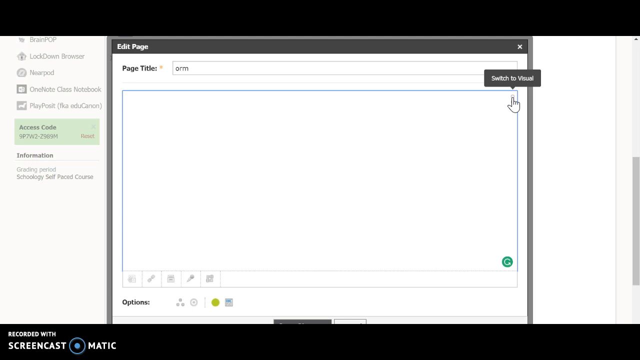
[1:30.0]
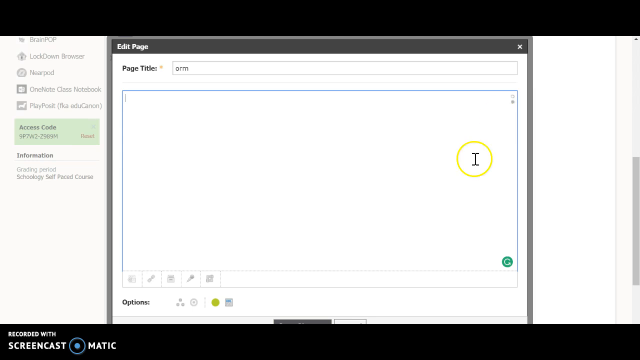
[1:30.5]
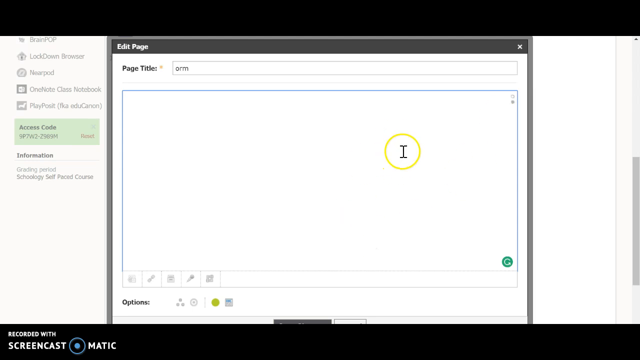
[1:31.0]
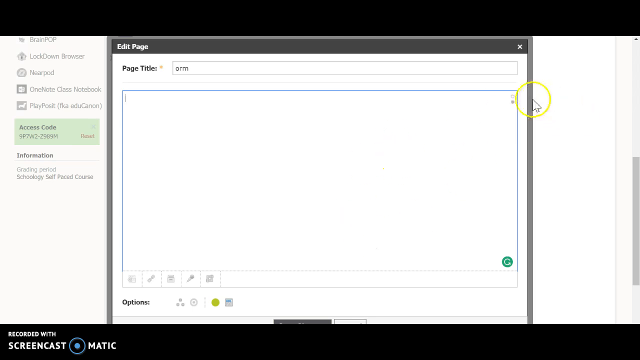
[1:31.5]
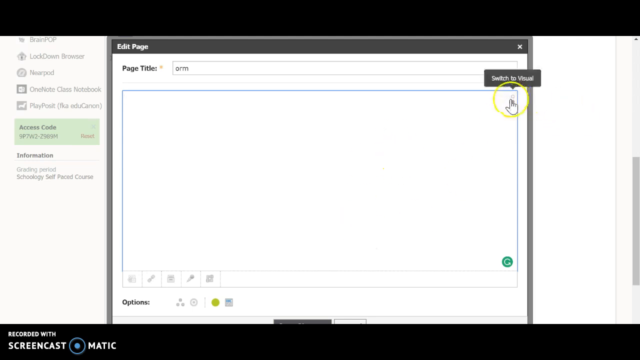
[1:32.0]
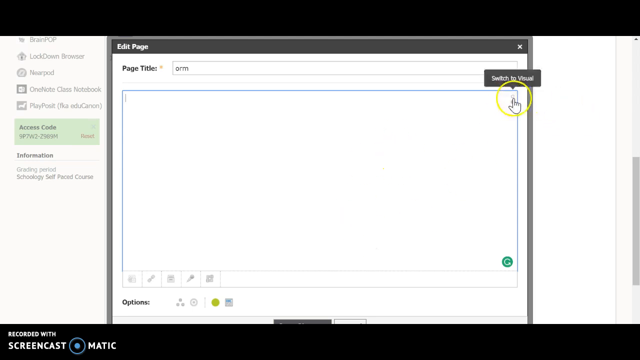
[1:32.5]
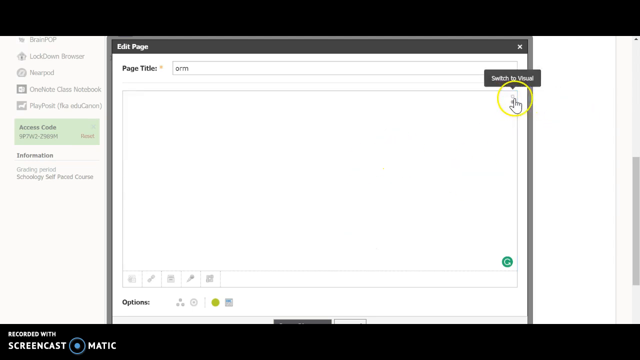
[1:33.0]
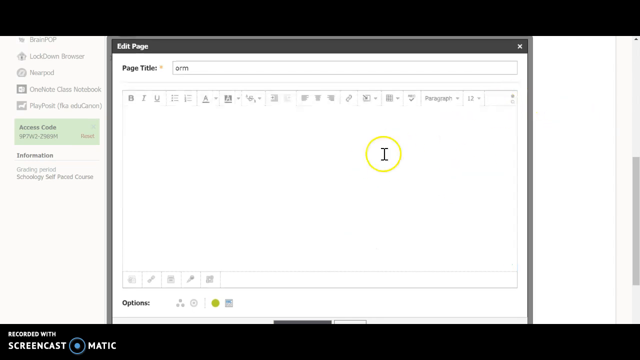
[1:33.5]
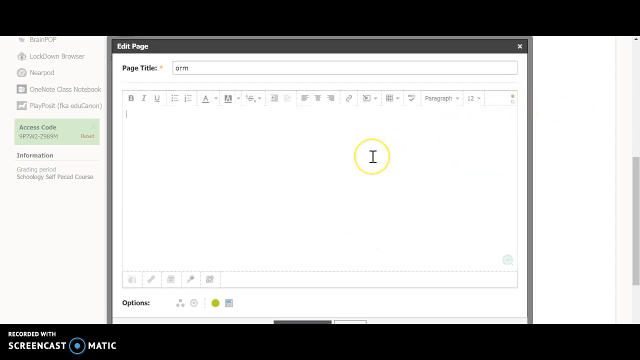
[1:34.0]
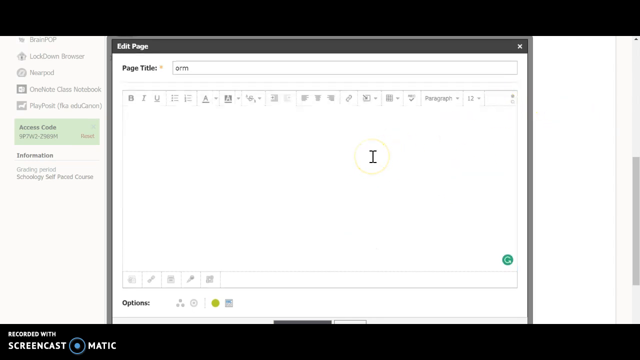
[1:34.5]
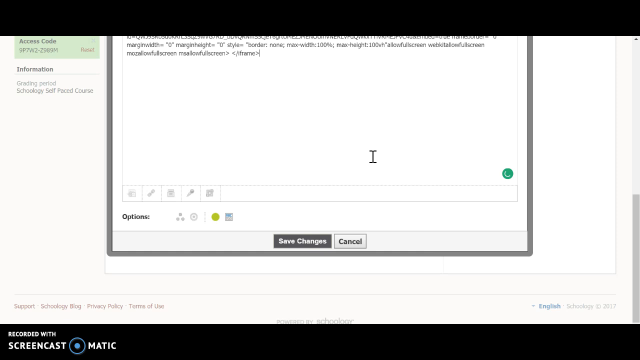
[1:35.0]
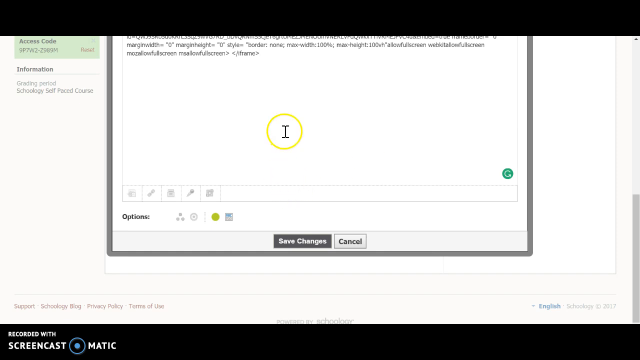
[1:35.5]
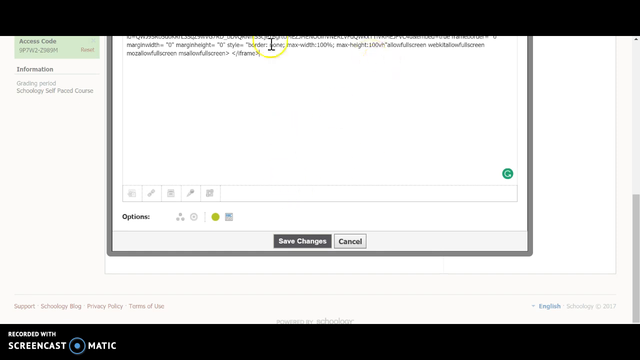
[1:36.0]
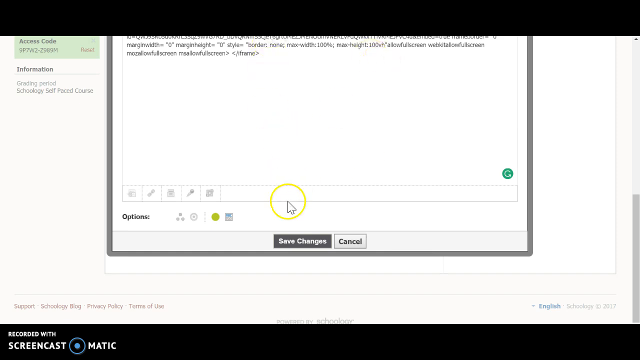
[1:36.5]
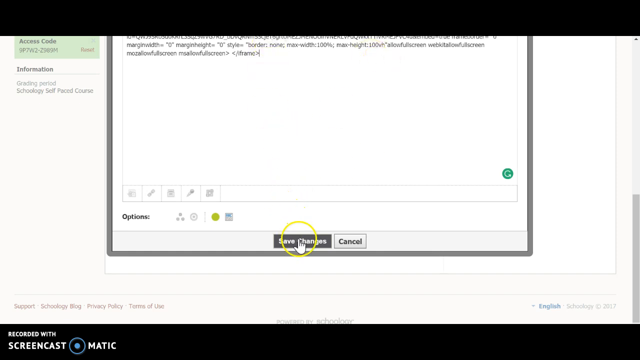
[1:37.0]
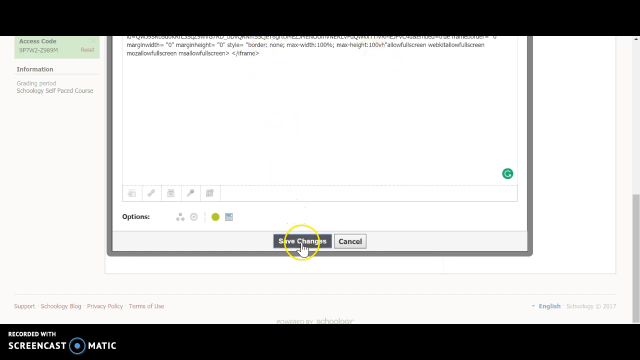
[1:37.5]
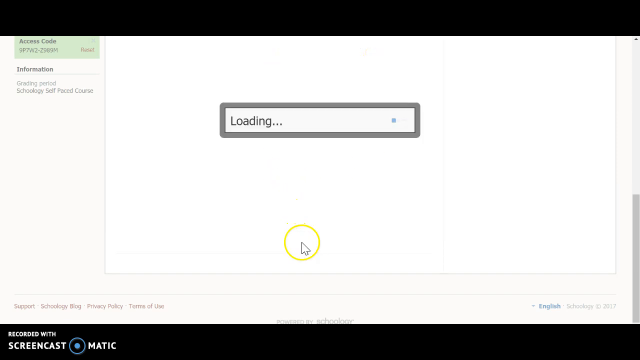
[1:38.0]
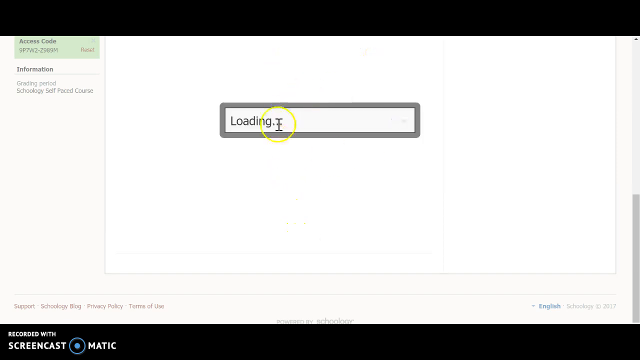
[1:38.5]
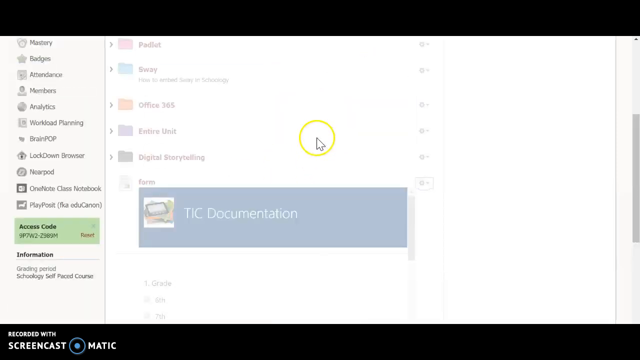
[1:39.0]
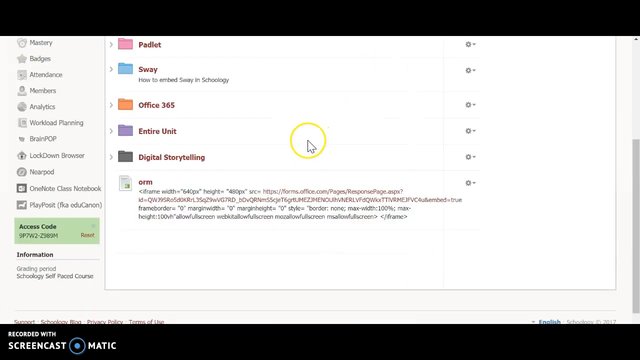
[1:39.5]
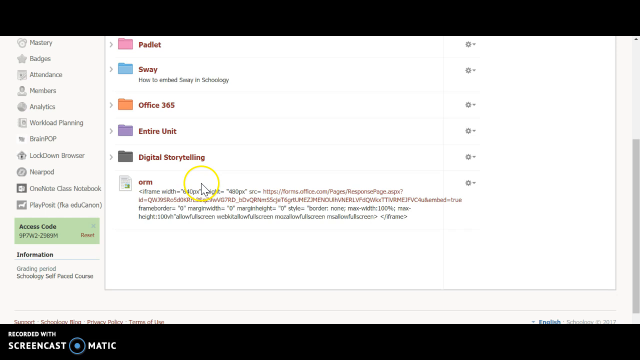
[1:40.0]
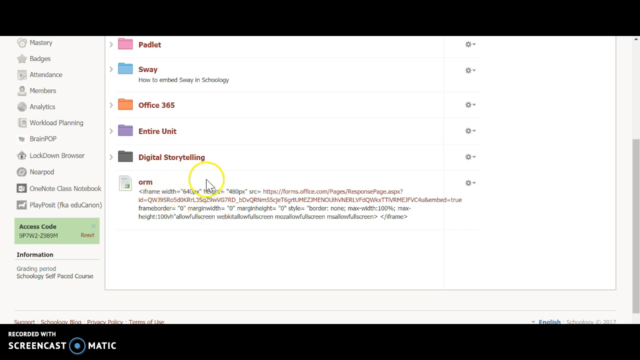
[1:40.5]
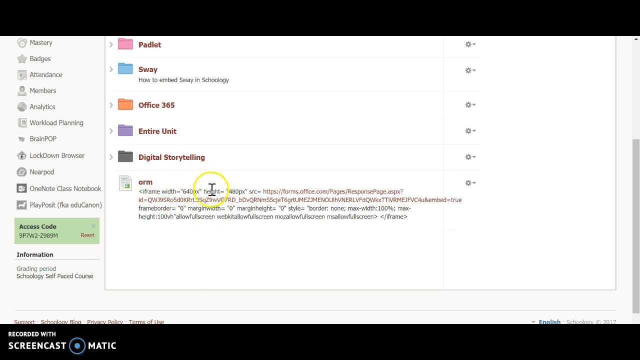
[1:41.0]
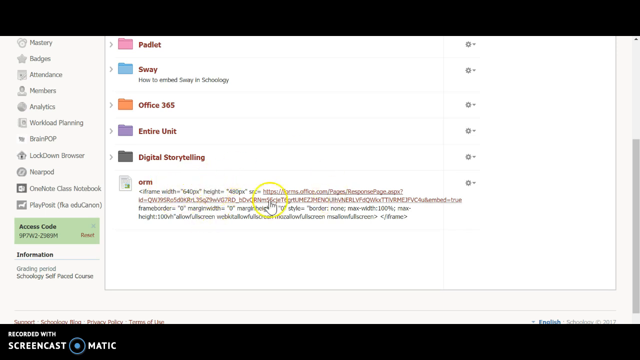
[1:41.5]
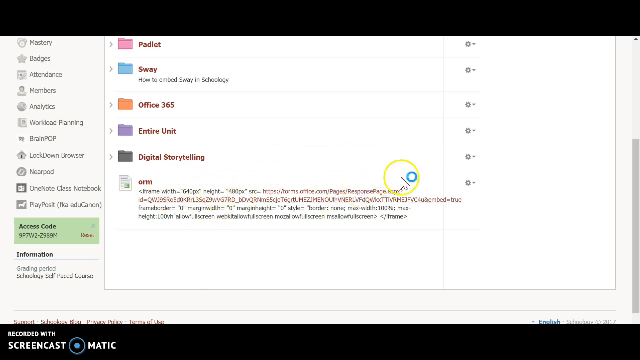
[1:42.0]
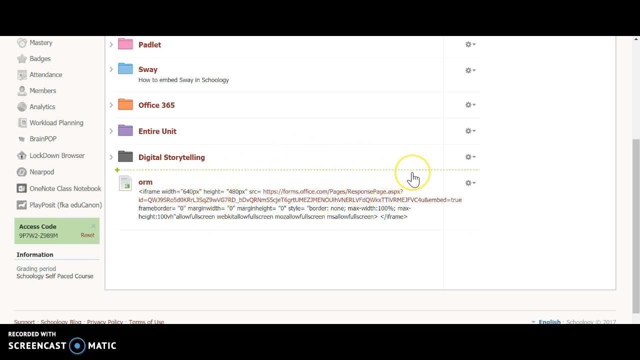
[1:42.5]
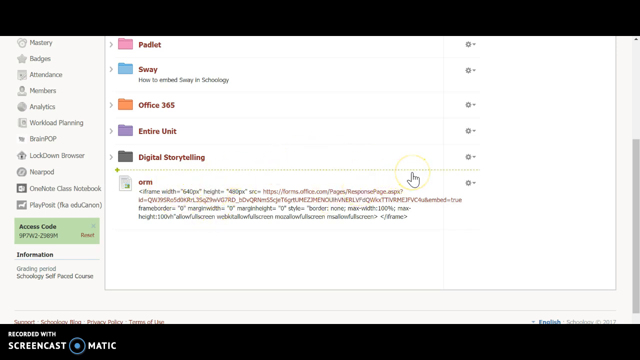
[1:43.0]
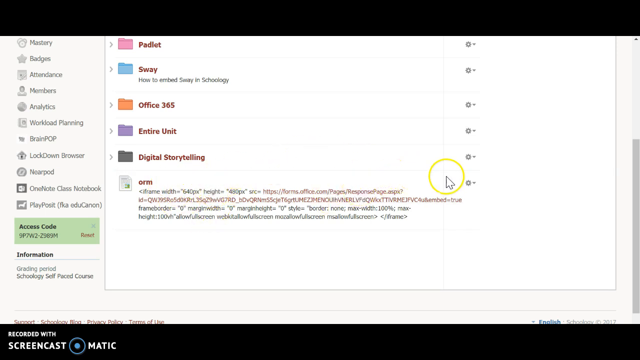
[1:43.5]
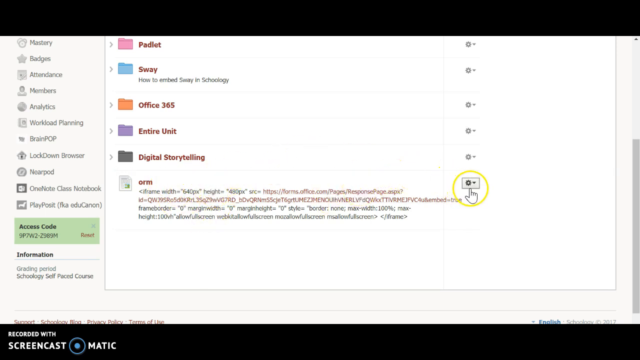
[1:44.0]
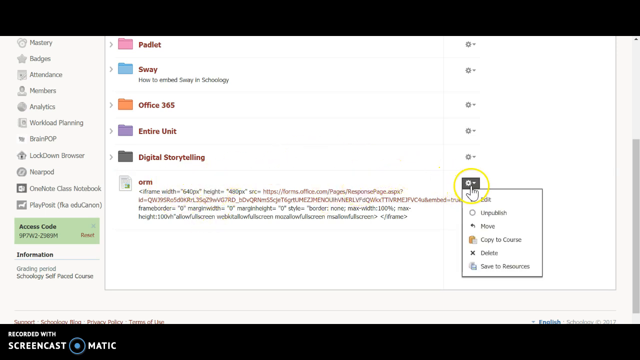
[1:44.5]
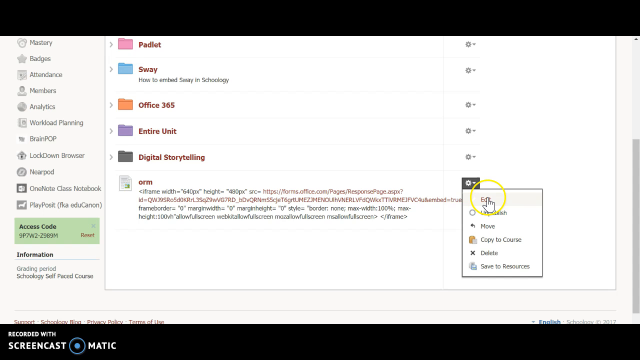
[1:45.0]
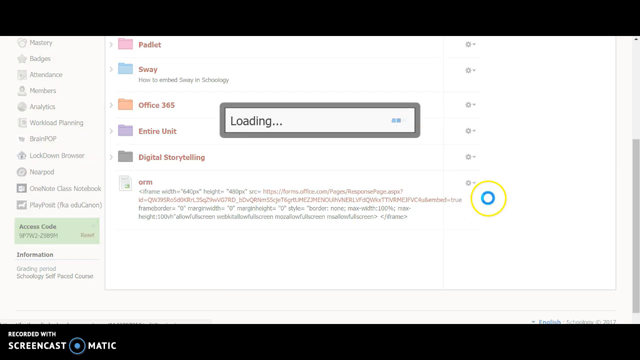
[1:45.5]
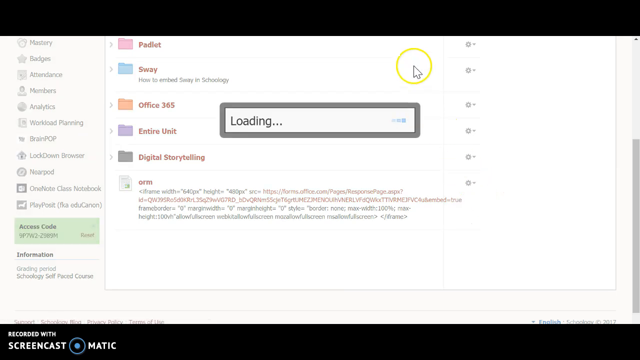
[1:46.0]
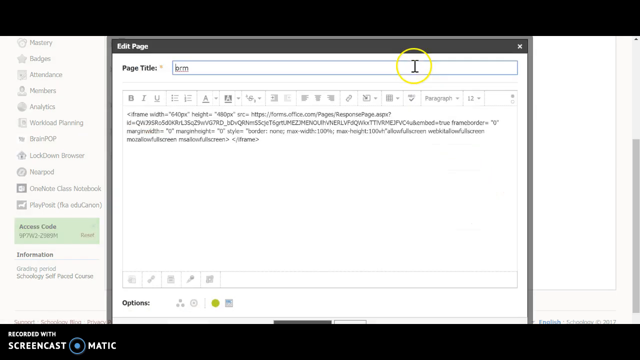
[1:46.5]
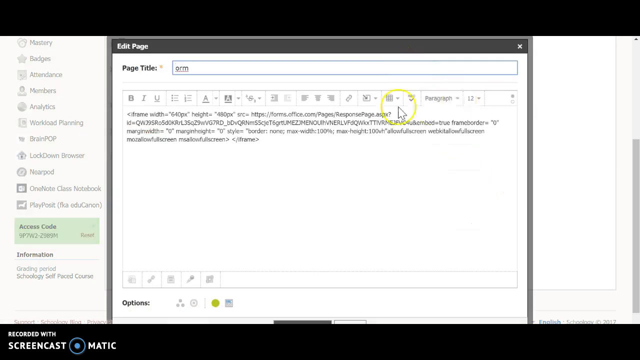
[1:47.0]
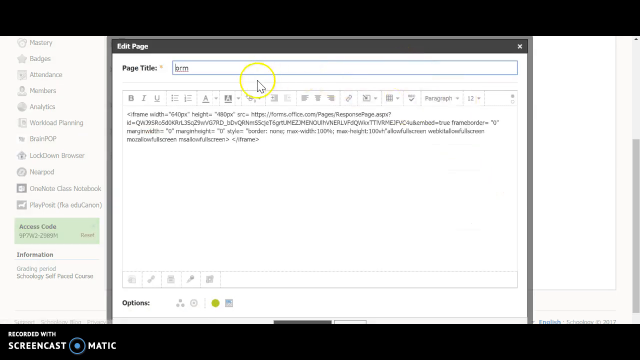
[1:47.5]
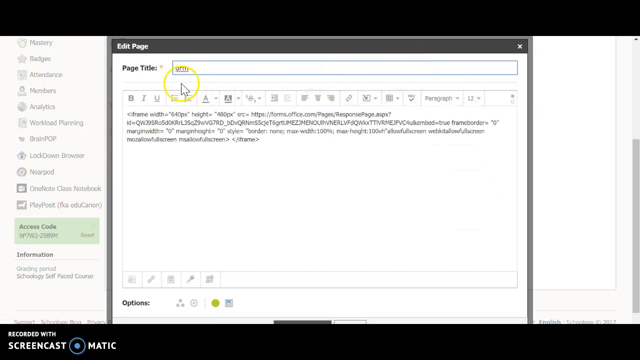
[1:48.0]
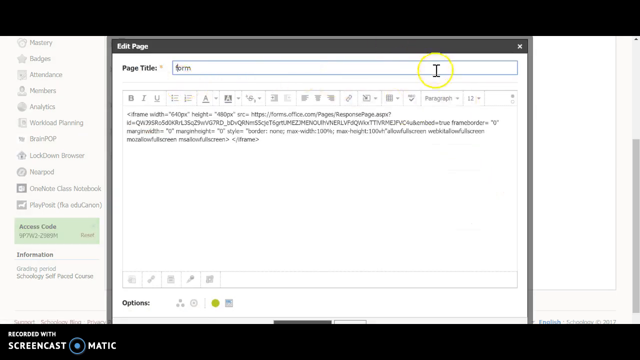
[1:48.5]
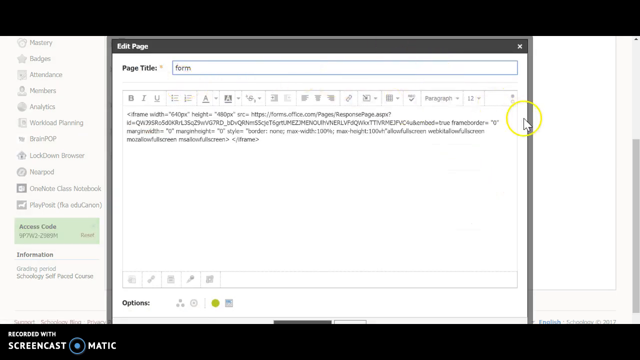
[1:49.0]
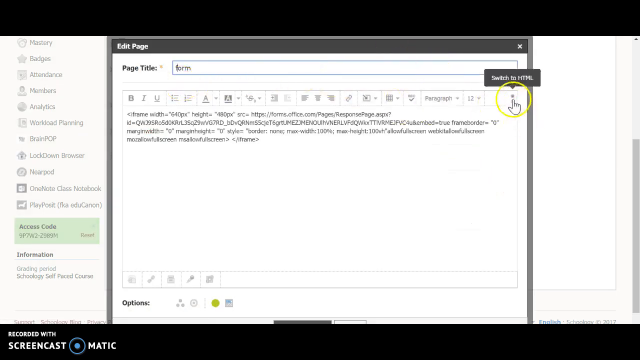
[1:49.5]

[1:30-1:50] The edit page appears again, with black at the top, and it says "page title." The user clicks on that and goes to "Save Choices," which brings up a loading screen. It says "ERM." They hit the gears icon where it says page title and change it to "ORM." On the left side it says "lockdown browser, notepad, one note class notebook, play post, access code," with a code shown and a red reset button for resetting the access code. Underneath that it says "information." The page on top is blank except for "page title," with "orm" in the box. They hit the upper right corner of that page, and it says "switch to visual" in a black box with white writing. They move the yellow cursor around the page a lot.